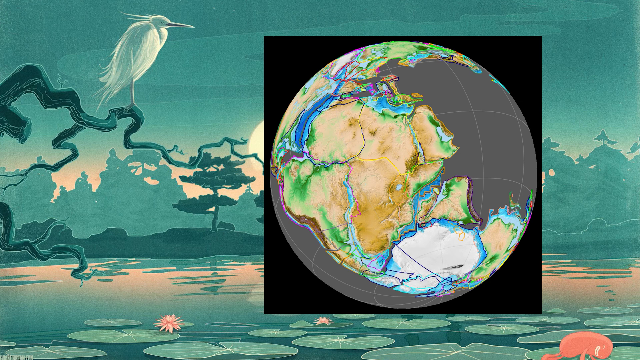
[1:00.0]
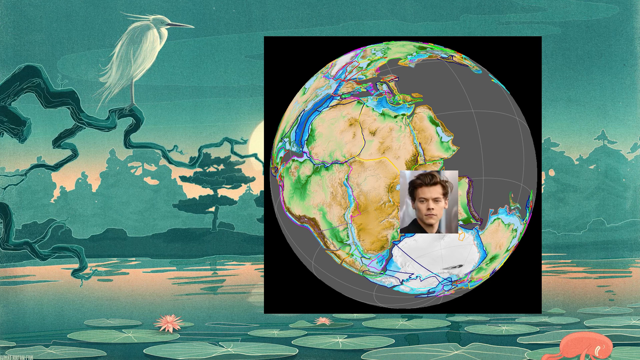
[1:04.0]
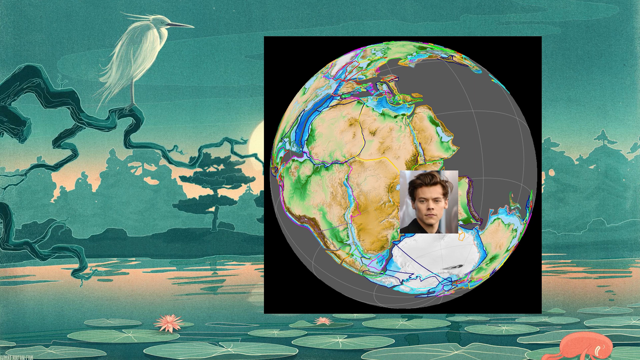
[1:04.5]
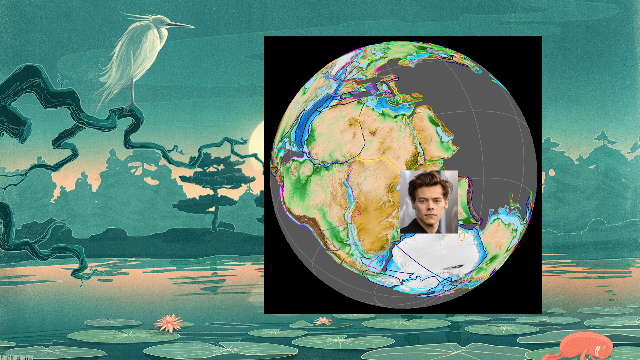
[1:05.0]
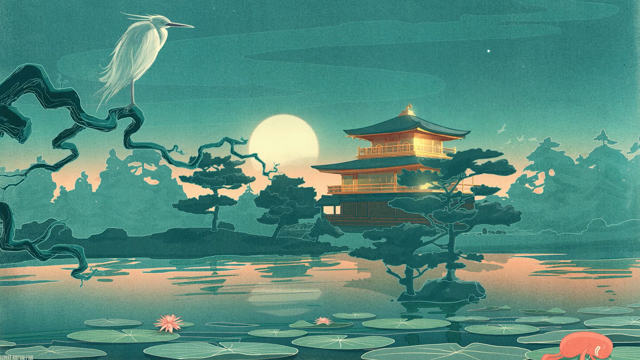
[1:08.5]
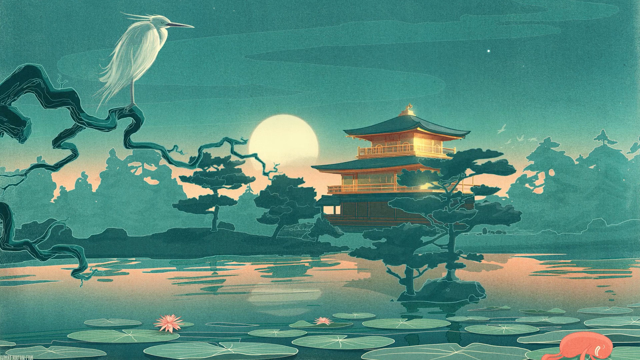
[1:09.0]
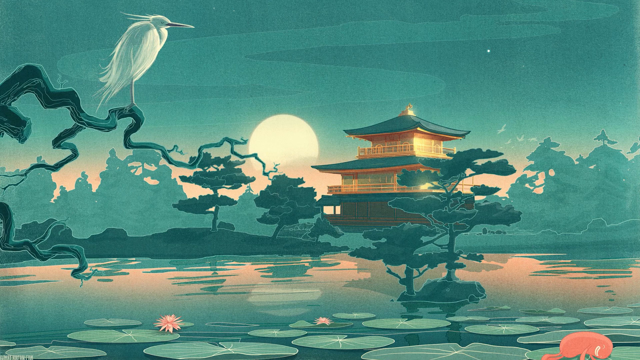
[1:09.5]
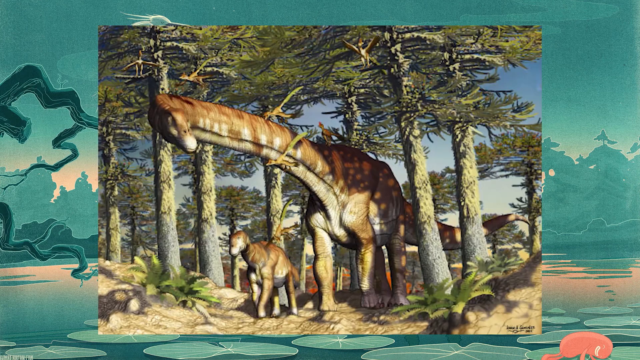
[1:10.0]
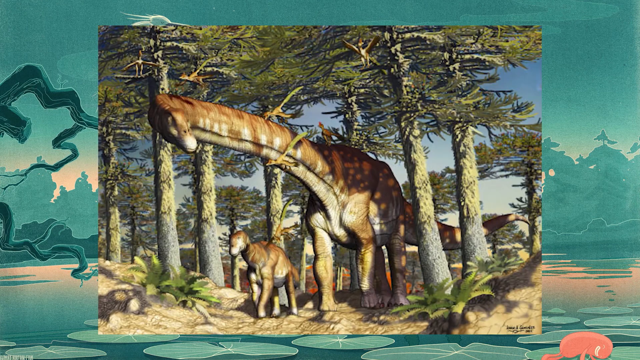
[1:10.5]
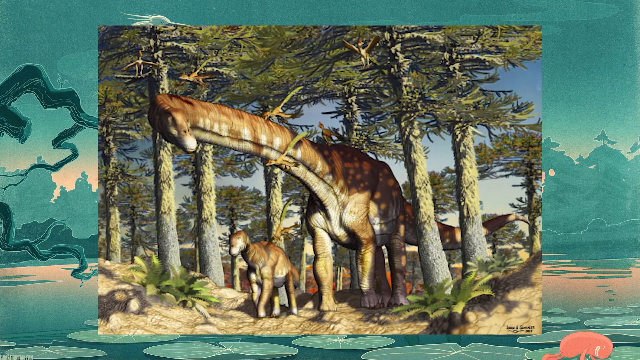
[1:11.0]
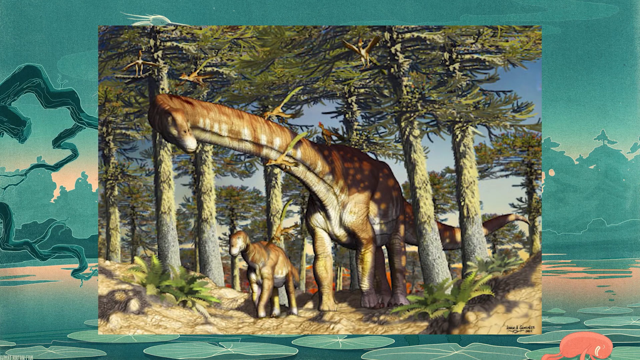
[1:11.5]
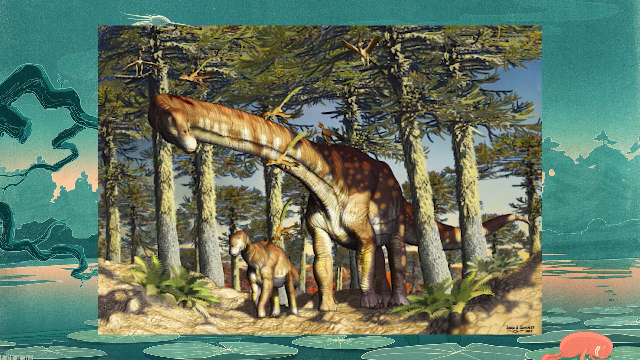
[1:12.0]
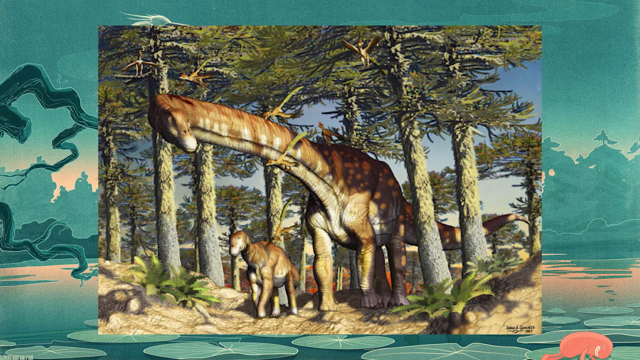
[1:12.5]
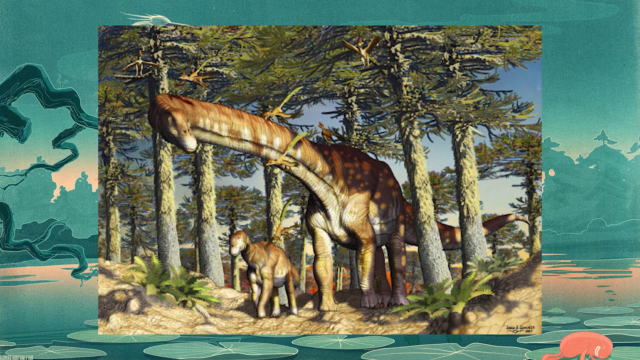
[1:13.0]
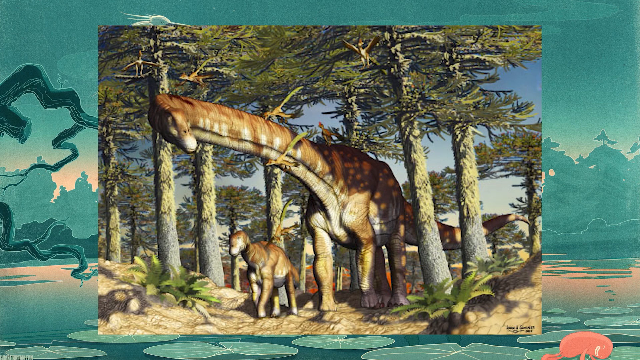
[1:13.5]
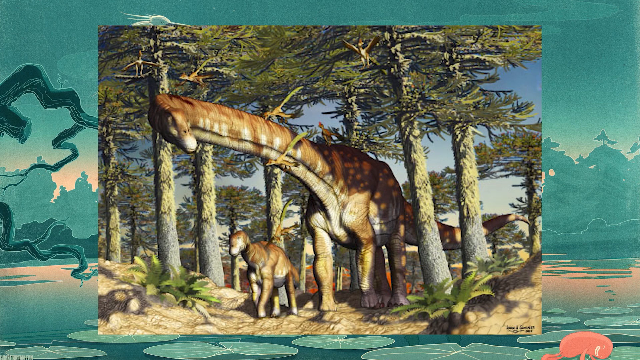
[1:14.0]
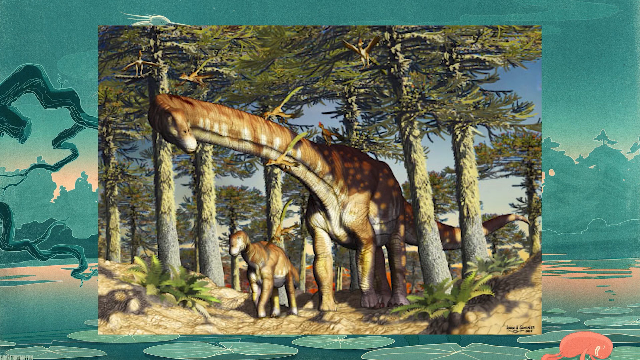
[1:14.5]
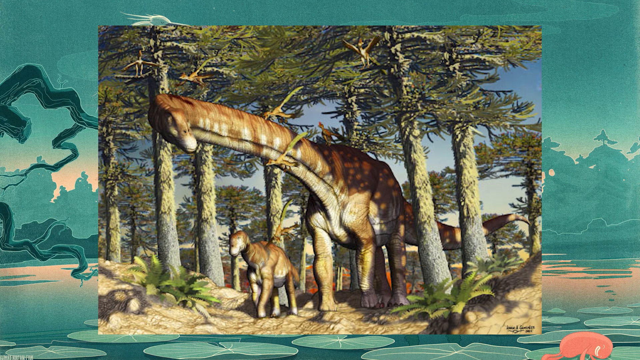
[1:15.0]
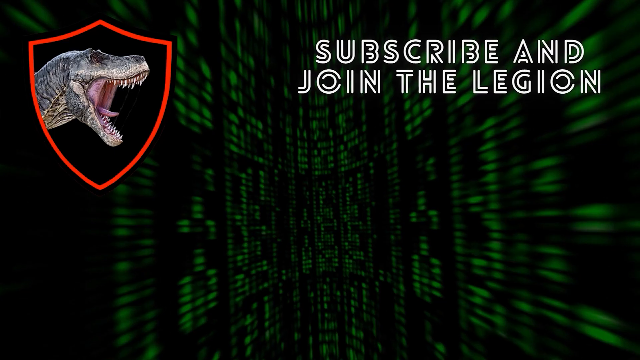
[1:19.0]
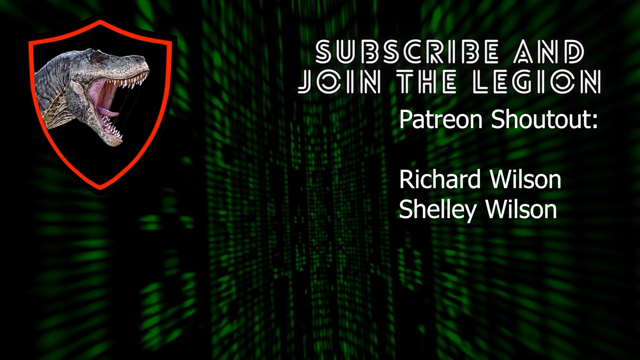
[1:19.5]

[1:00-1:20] The same background shows the Japanese house in the distance surrounded by Japanese trees, with lily pads on a river in the foreground, probably about 13 or 14 of them. On the left in the foreground is a Japanese tree with a big white bird with a big beak perched on it. A map or globe image then appears over top of the background, with all of the continents kind of joined together: Africa is right up next to South America, Antarctica is below them all, they are all touching, and there is a lot of ocean all around the outside of the planet. A small image of Harry Styles appears on the globe and then disappears quickly. The image of the brontosaurus walking through the forest with the baby brontosaurus beside it then appears.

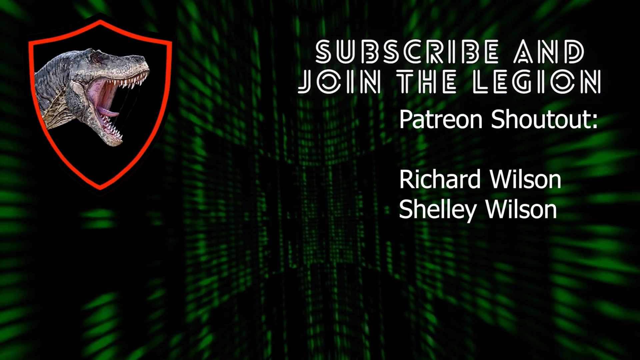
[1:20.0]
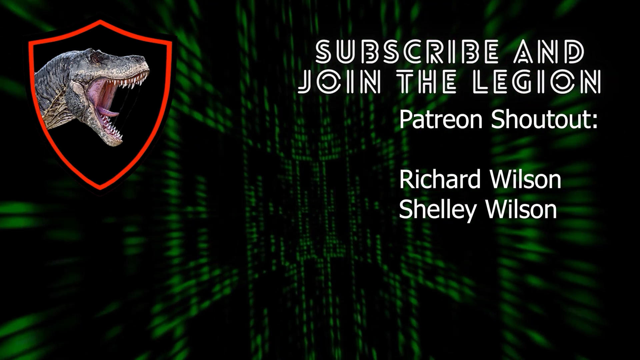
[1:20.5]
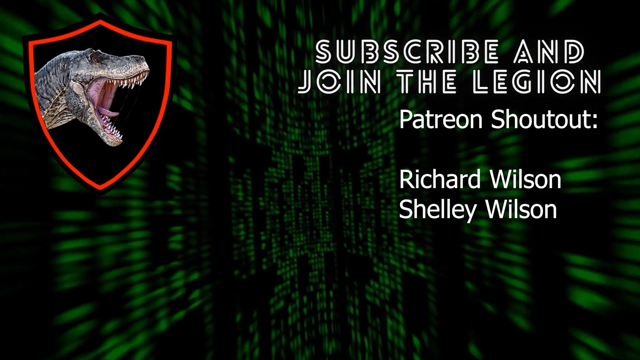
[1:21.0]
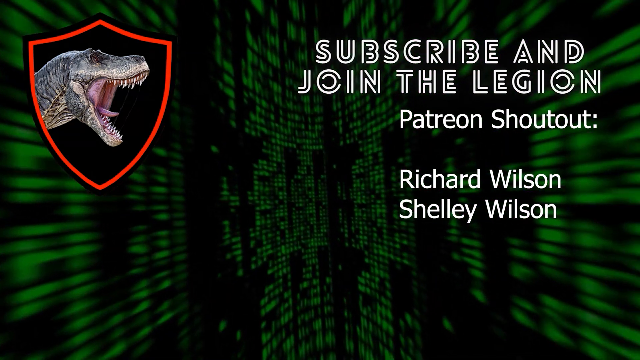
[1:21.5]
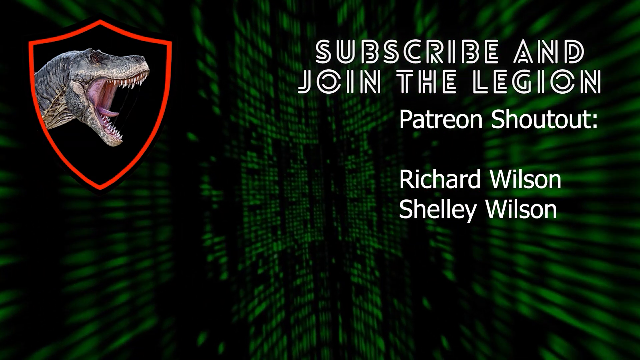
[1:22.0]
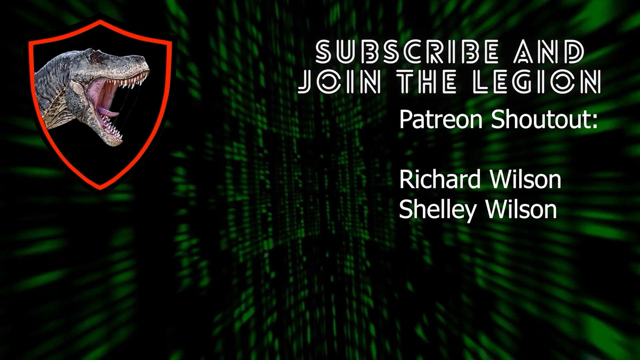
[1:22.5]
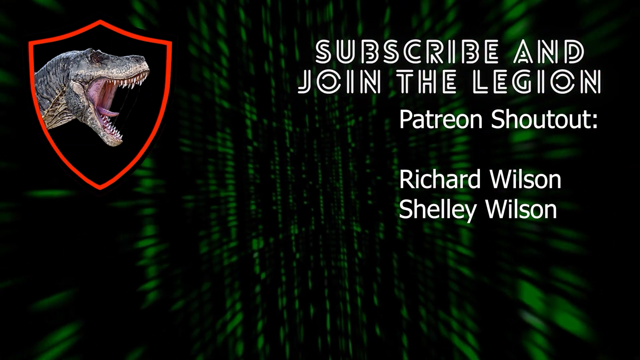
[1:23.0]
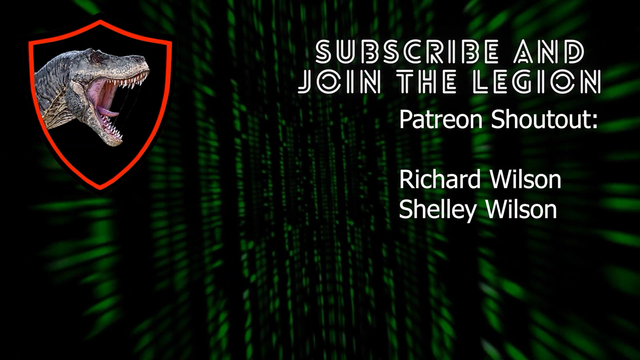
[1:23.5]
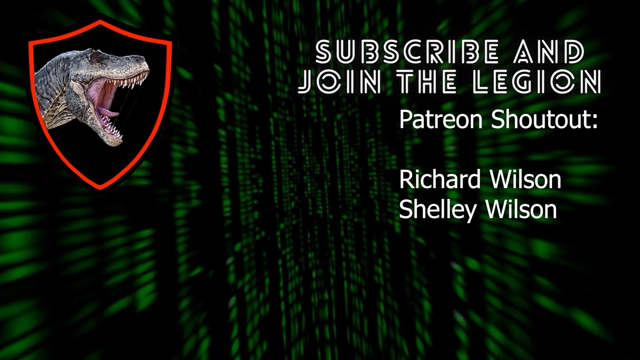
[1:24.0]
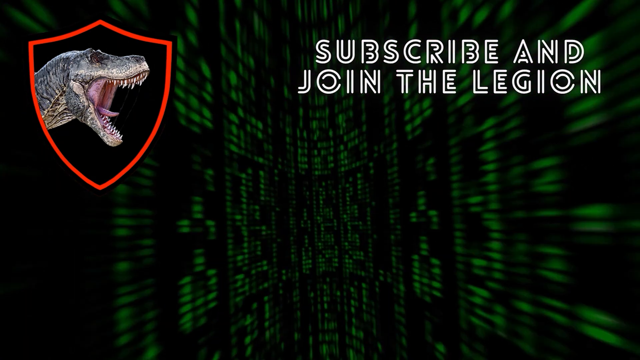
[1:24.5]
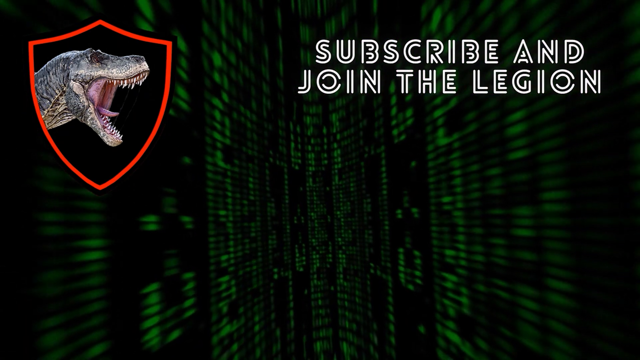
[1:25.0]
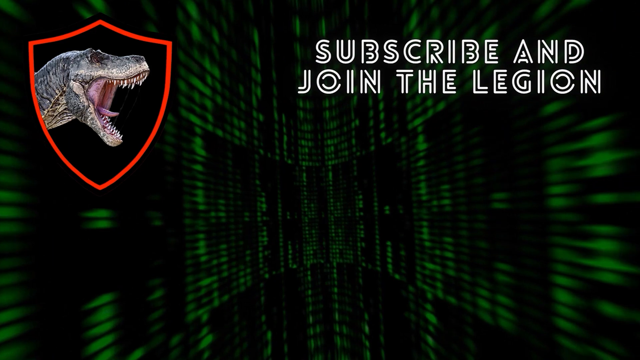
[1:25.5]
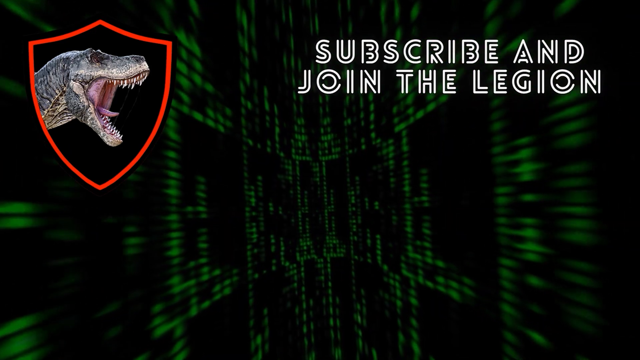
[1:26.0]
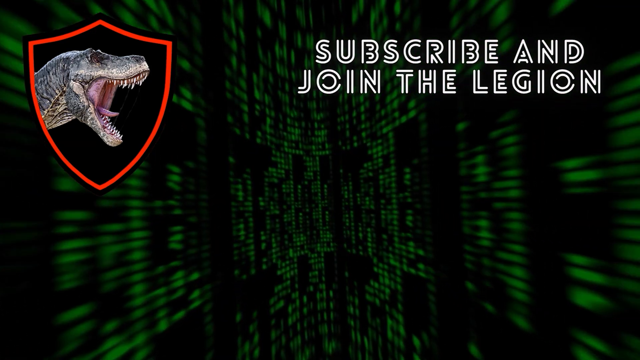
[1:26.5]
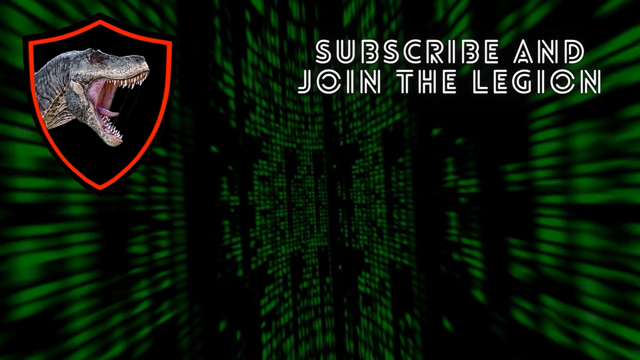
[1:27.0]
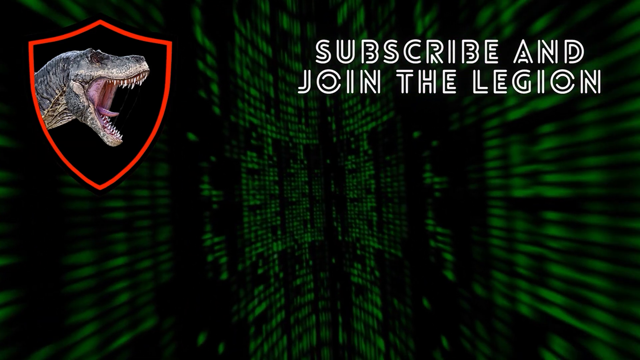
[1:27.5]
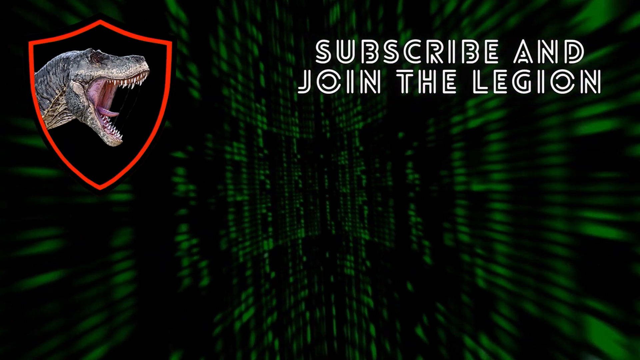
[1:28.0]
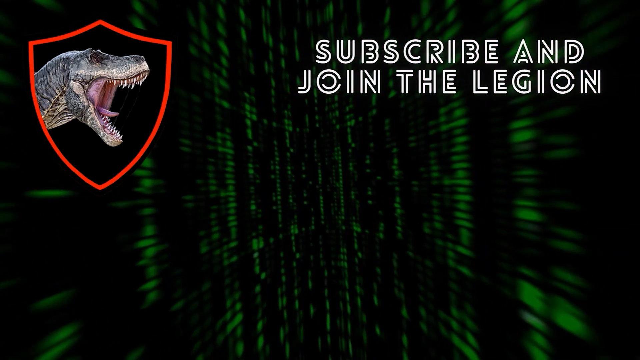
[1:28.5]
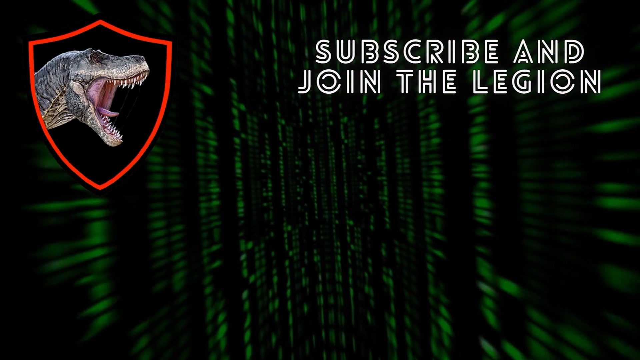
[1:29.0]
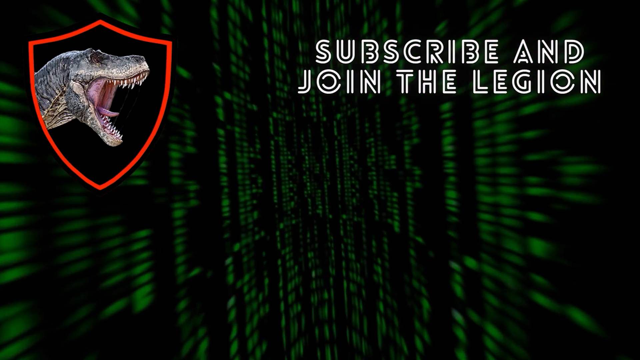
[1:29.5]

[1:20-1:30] This appears to be the end of the YouTube video. A Matrix-style background of green and black dots comes in and out of focus and rotates through the screen. A shield-type emblem in the top left of the screen contains a screaming Tyrannosaurus rex. Text on the top right of the screen says "subscribe and join the Legion" and "Patreon shout out Richard Wilson and Shelly Wilson" as the Matrix-style background continues to transition.